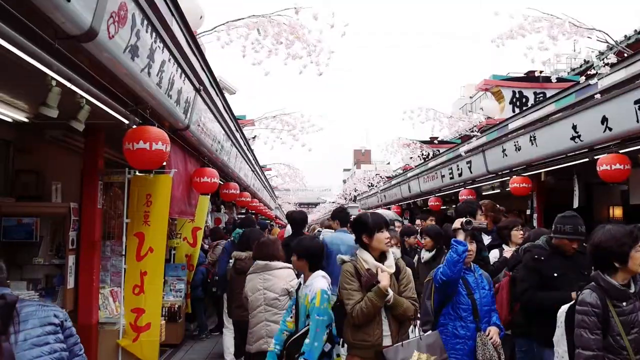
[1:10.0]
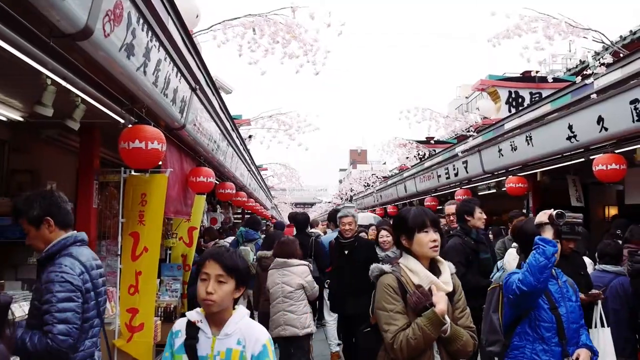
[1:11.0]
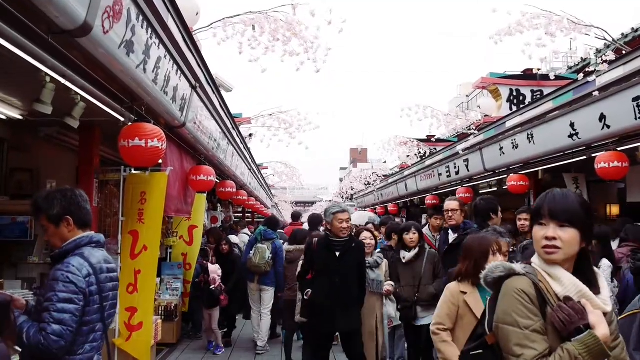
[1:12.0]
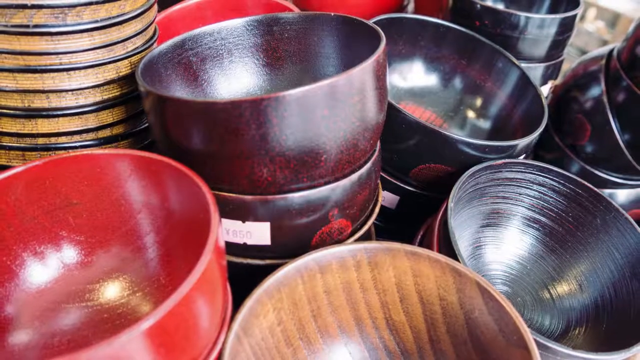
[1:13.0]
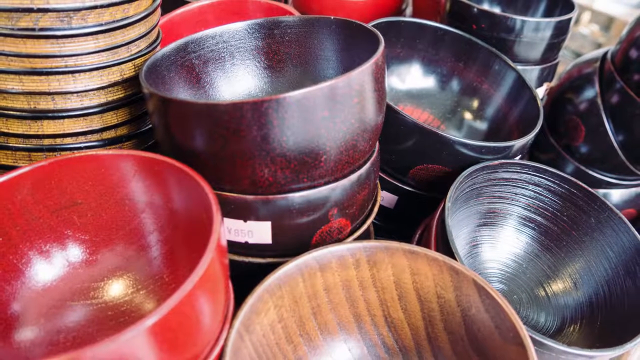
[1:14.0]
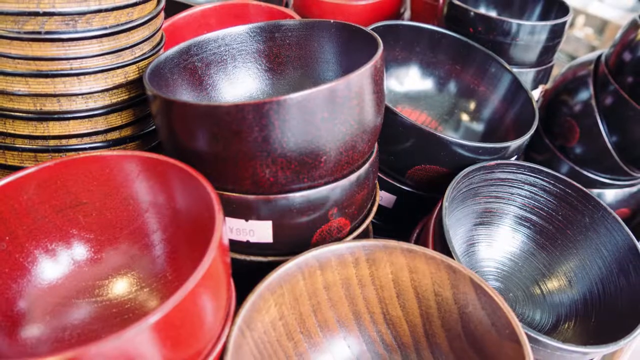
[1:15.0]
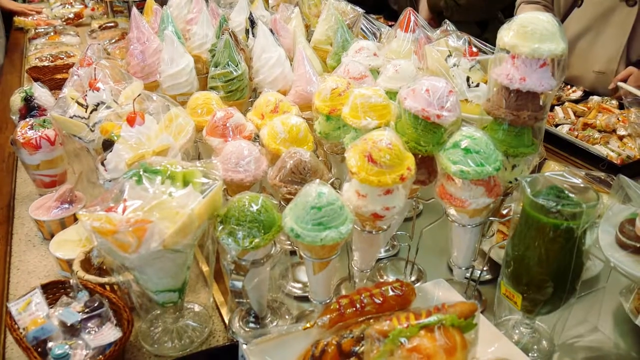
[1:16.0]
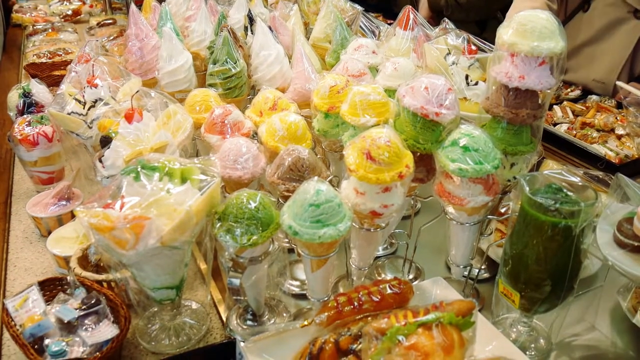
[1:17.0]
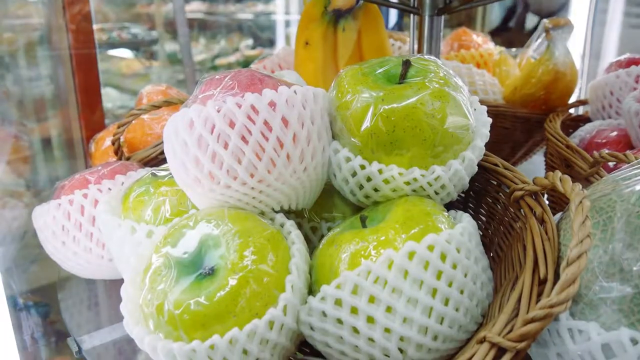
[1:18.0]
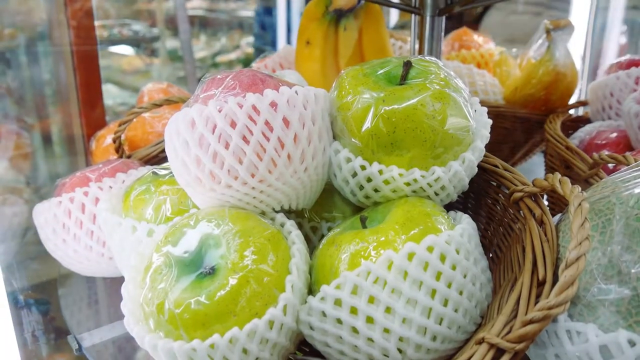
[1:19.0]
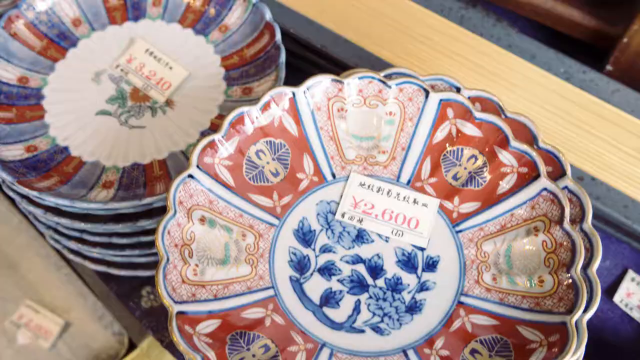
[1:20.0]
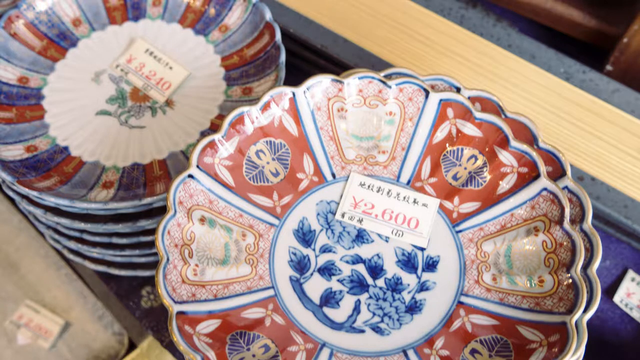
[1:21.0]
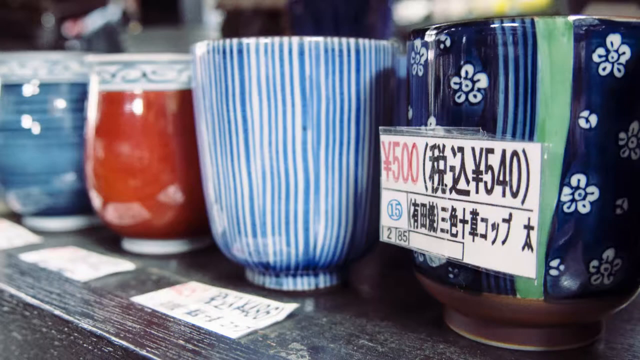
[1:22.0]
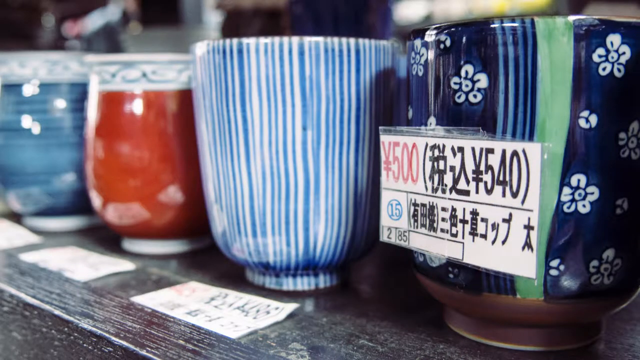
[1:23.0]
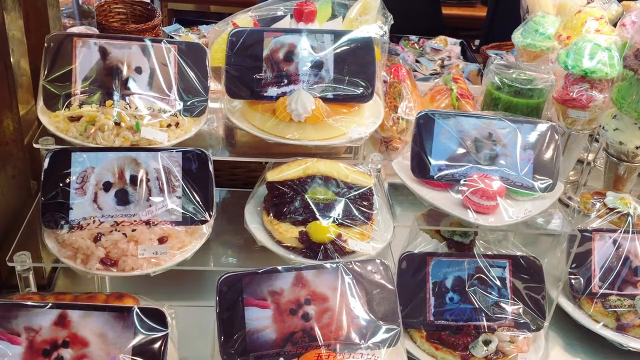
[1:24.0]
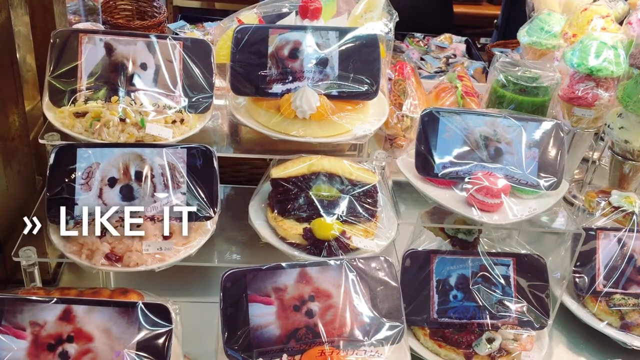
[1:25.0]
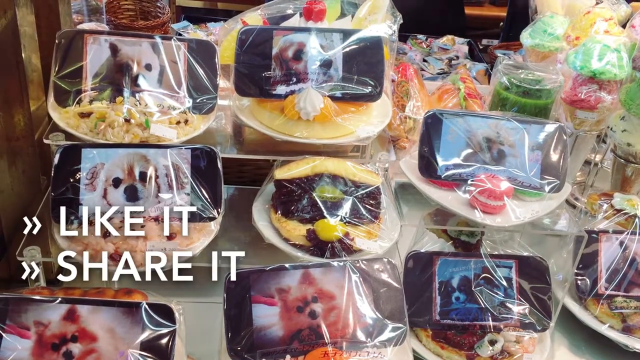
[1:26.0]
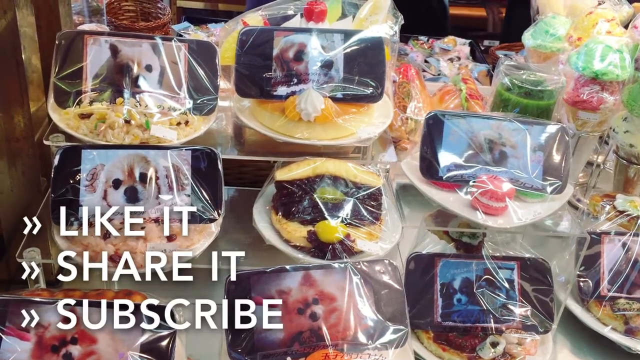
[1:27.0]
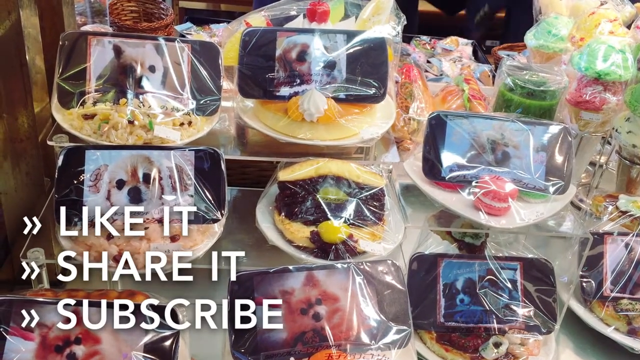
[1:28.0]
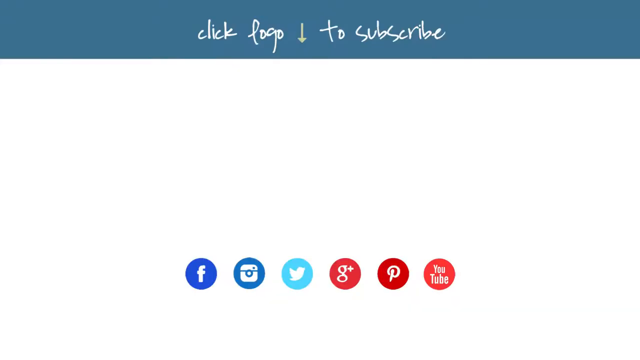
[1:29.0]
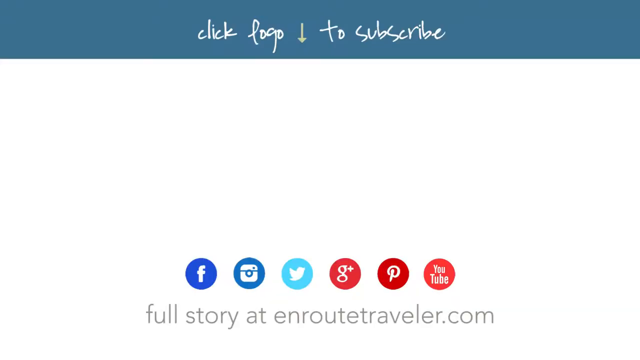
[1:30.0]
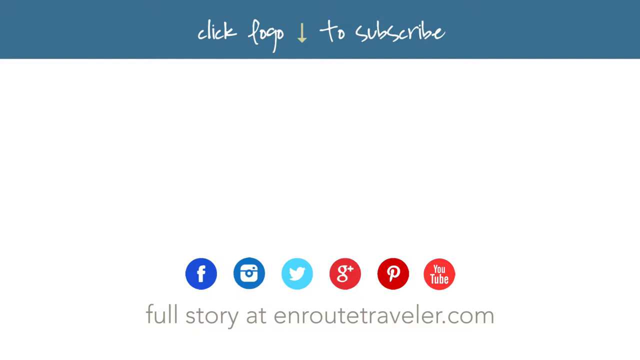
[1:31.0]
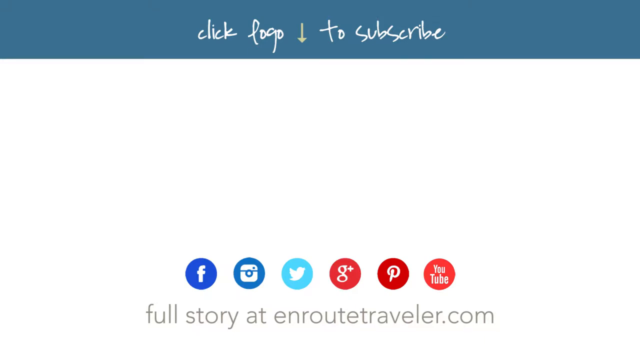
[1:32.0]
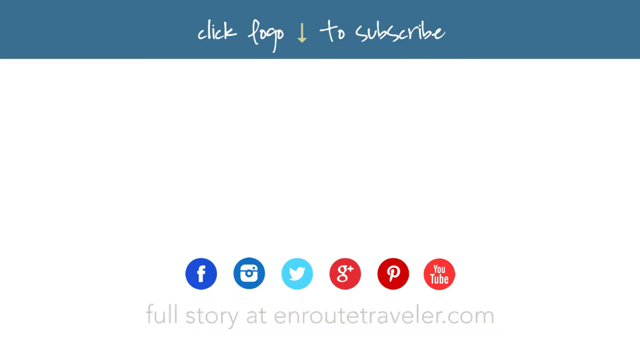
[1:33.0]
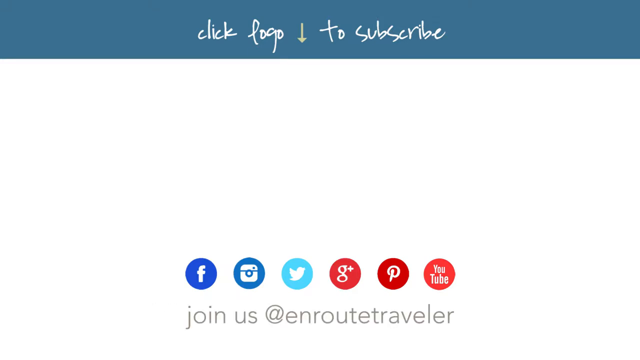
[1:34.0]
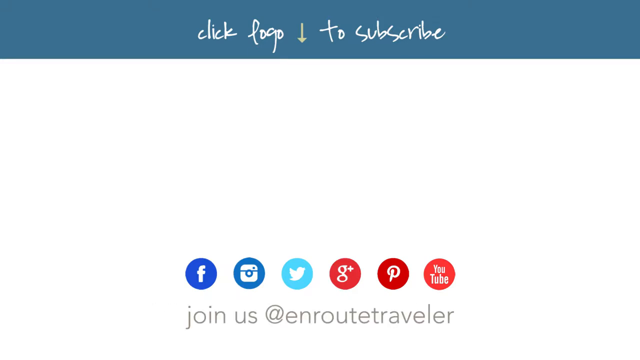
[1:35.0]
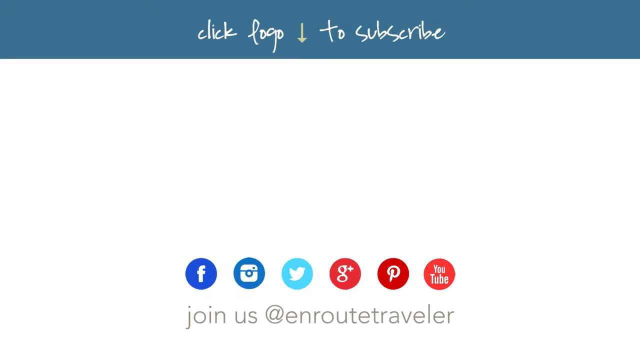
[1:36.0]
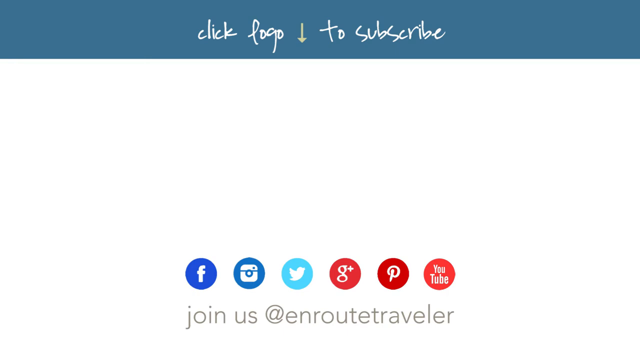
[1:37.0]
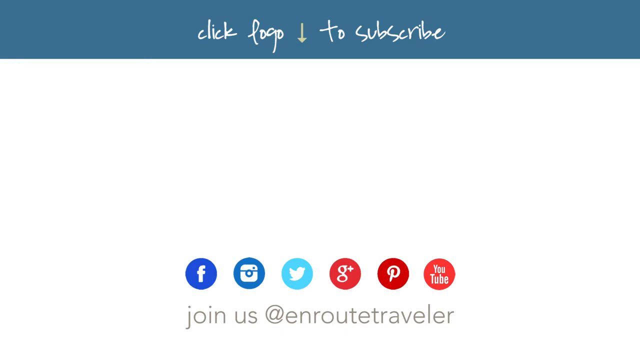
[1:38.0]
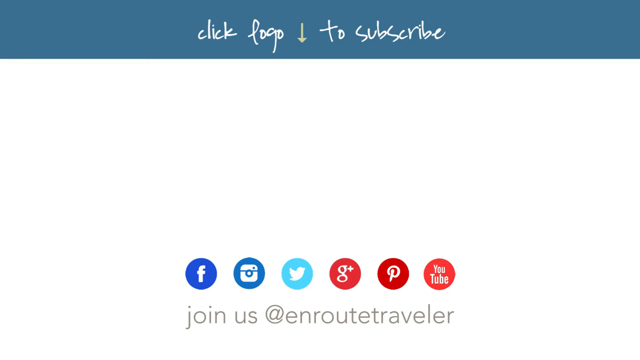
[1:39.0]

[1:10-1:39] The scene changes to the street, where there are people. Balls are shown, red ones, brown ones, dark ones, of different colors. Other items are wrapped in polythene paper, and people are shopping. Fruits are wrapped in polythene paper, with a white outer part. Other plates are shown, and balls of different colors, some made using a mixture of colors. Food items on a plate are wrapped with polythene paper; inside the polythene there seems to be a phone or a tablet displaying a puppy or dog, with a video playing. Women pick them out. Then the text "like it, share it, and subscribe" appears, along with "click logo to subscribe", Facebook, Twitter, Instagram and YouTube icons, and "full story at nroutetraveler.com". There is blue at the top, and the background is white.